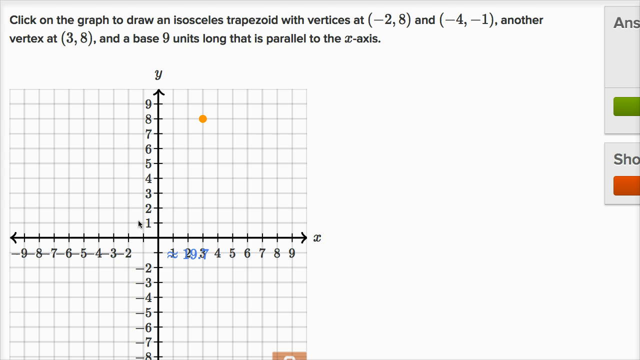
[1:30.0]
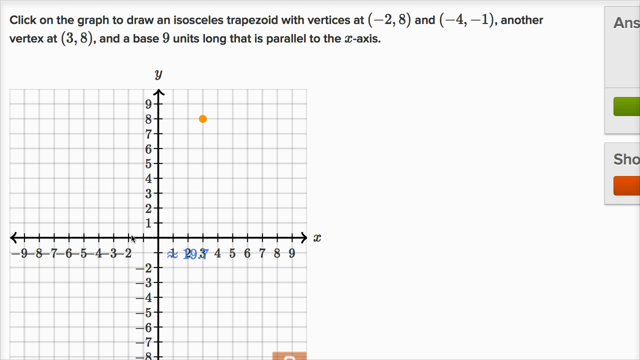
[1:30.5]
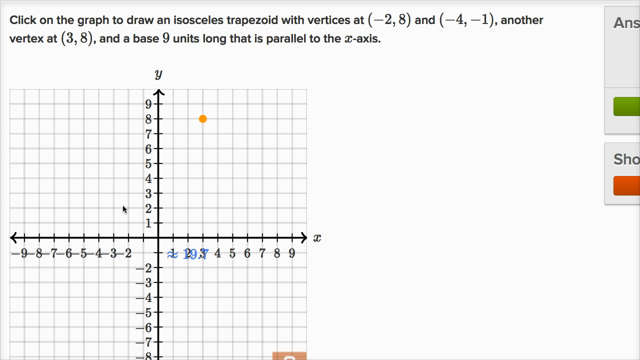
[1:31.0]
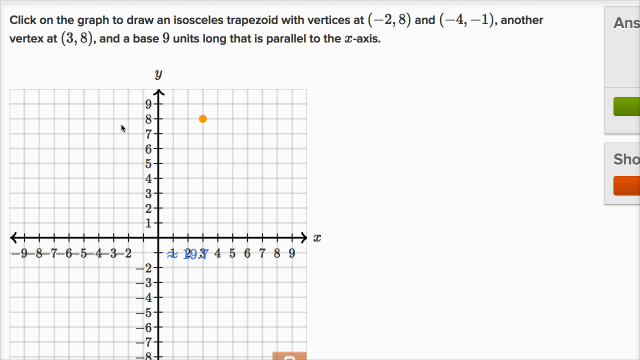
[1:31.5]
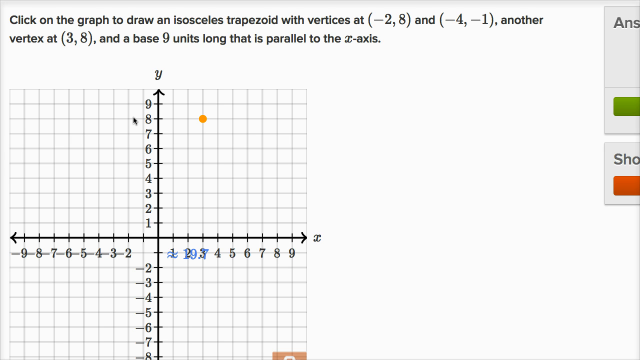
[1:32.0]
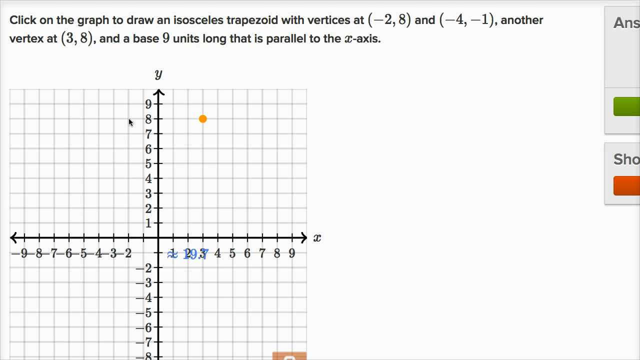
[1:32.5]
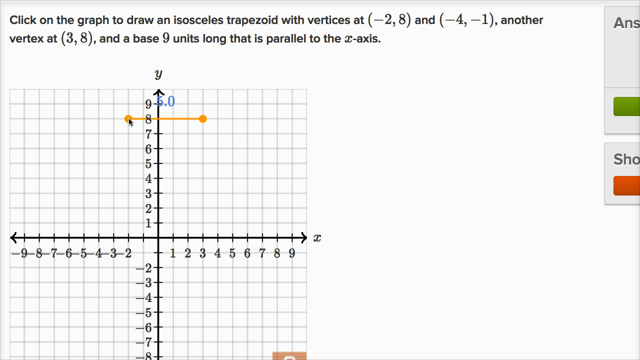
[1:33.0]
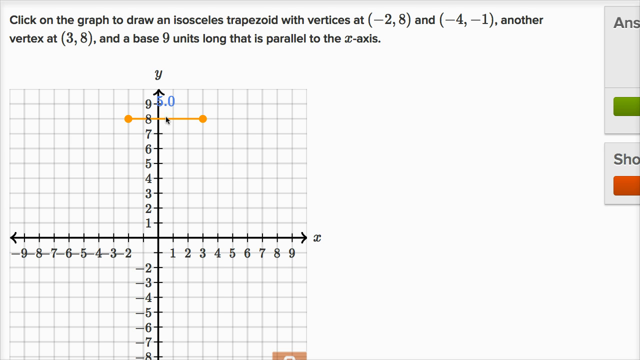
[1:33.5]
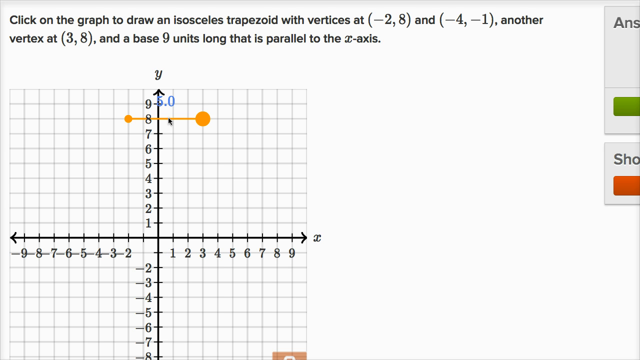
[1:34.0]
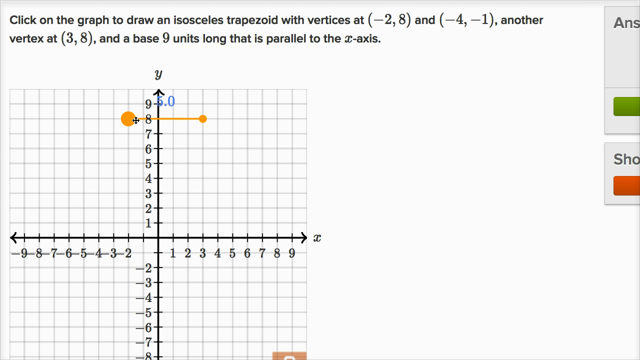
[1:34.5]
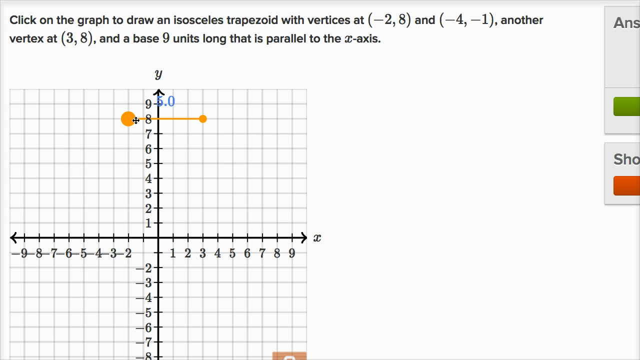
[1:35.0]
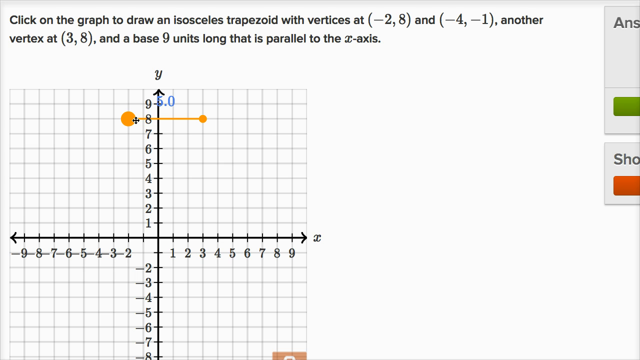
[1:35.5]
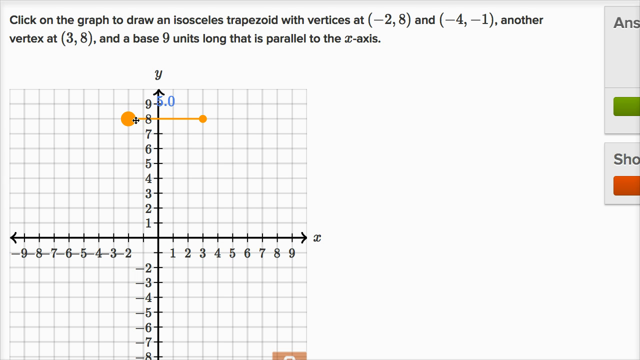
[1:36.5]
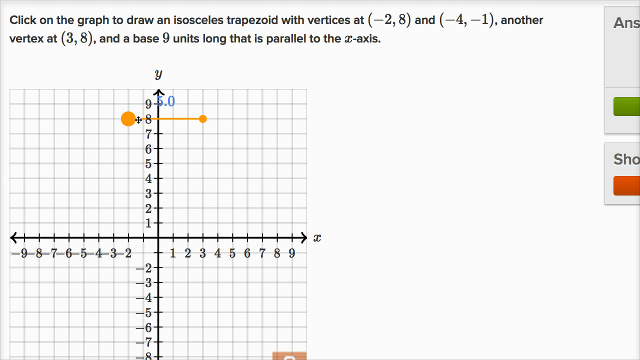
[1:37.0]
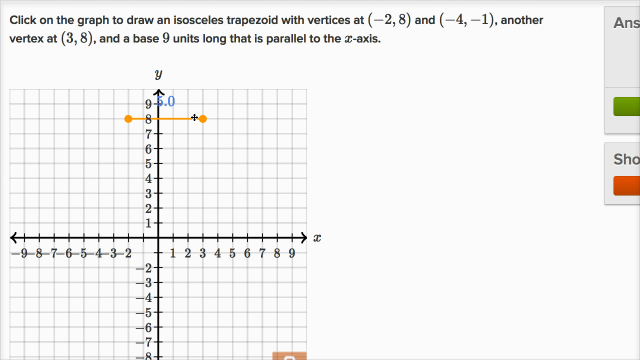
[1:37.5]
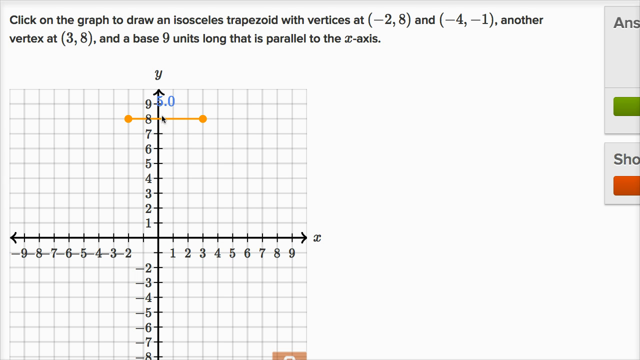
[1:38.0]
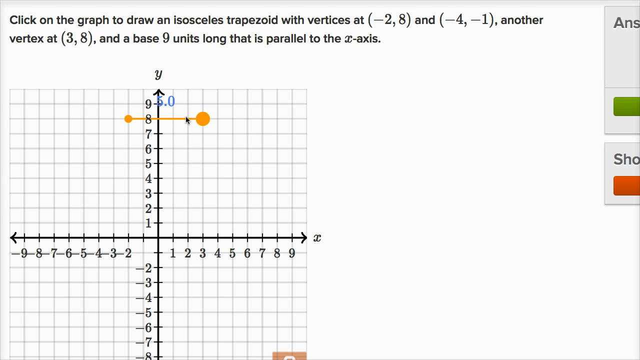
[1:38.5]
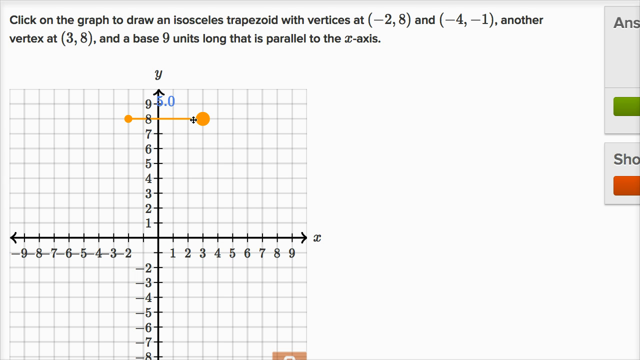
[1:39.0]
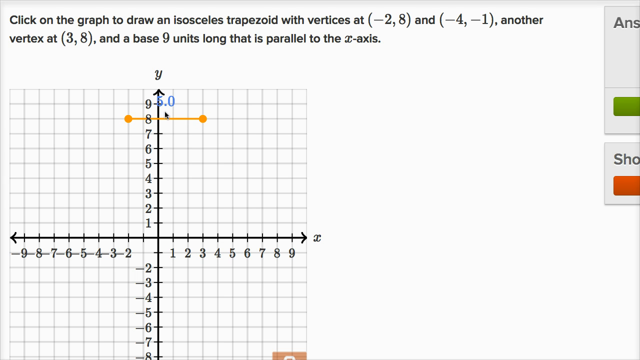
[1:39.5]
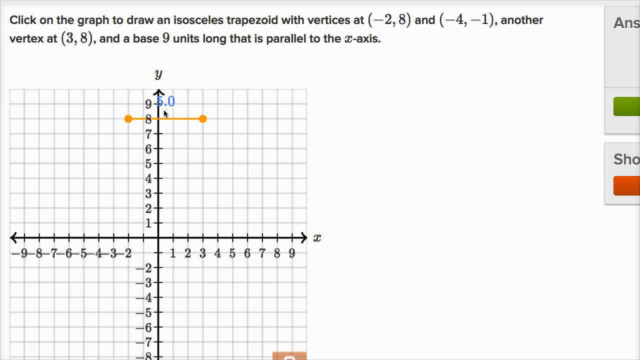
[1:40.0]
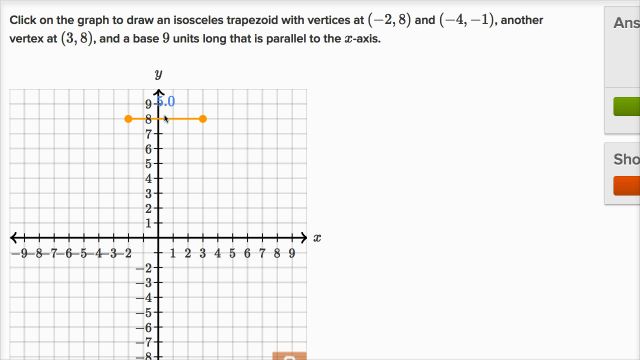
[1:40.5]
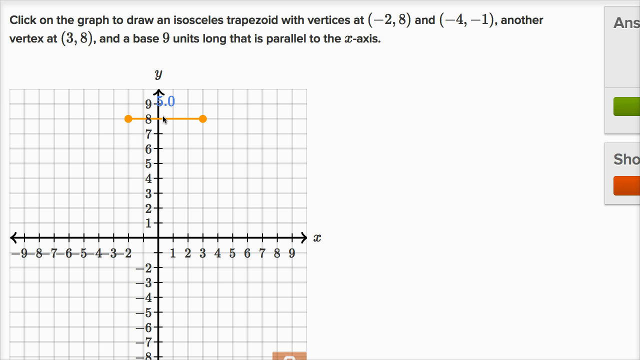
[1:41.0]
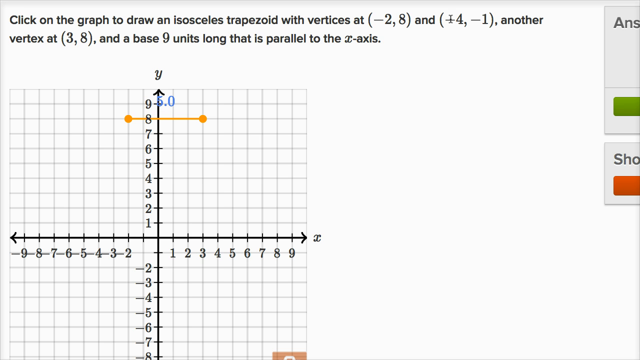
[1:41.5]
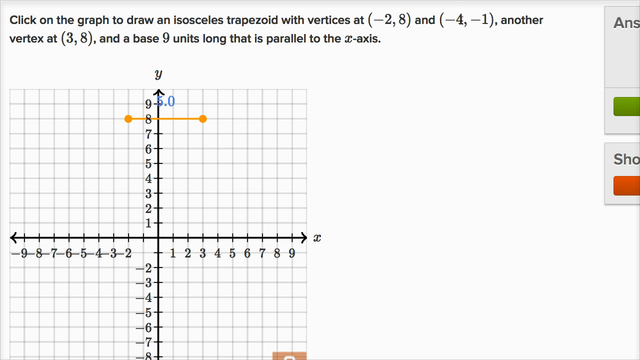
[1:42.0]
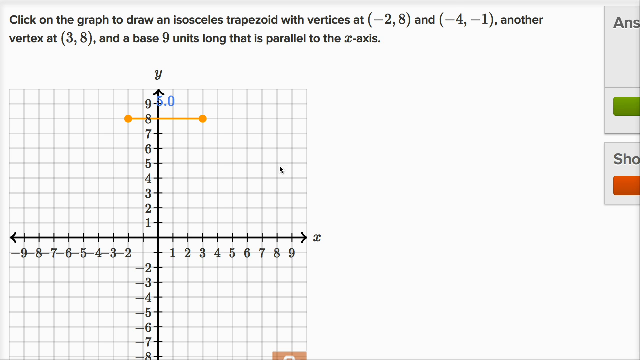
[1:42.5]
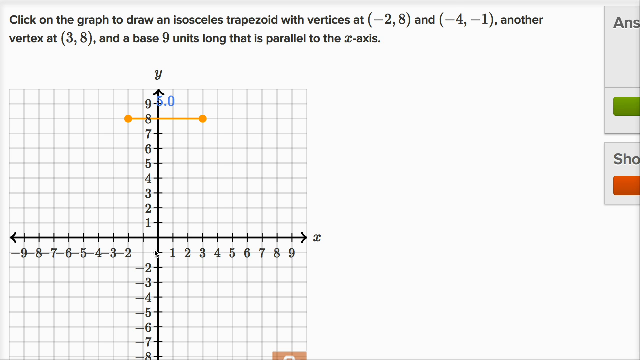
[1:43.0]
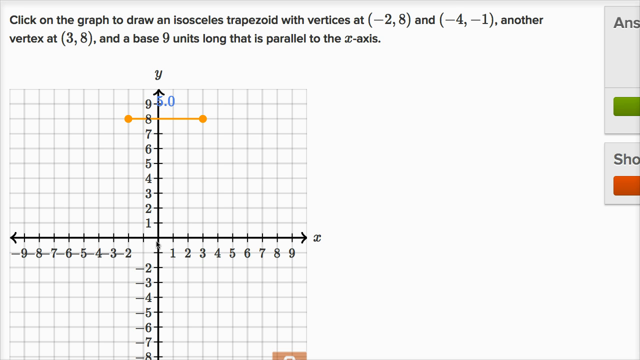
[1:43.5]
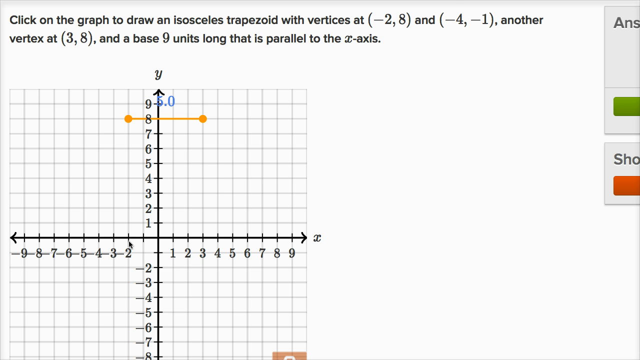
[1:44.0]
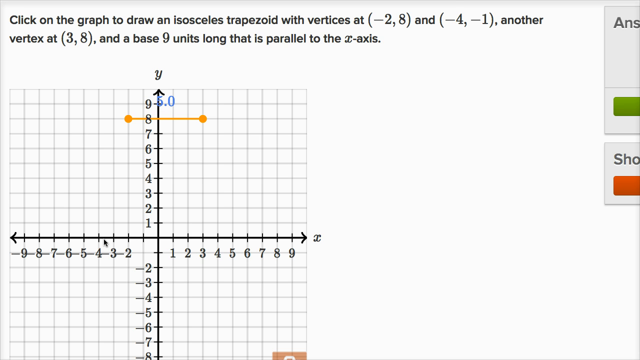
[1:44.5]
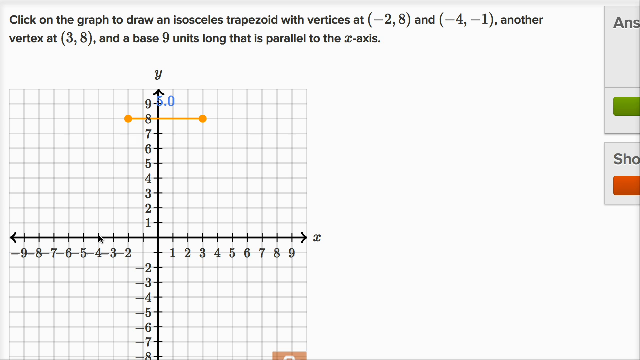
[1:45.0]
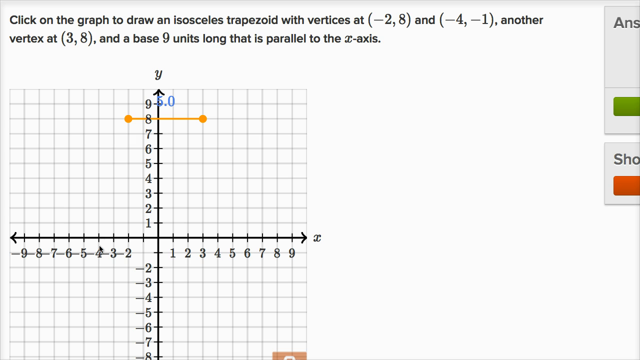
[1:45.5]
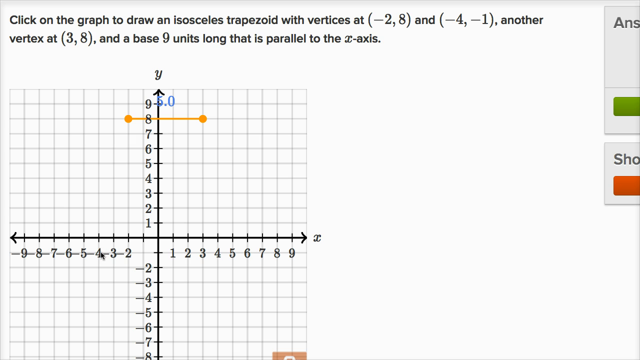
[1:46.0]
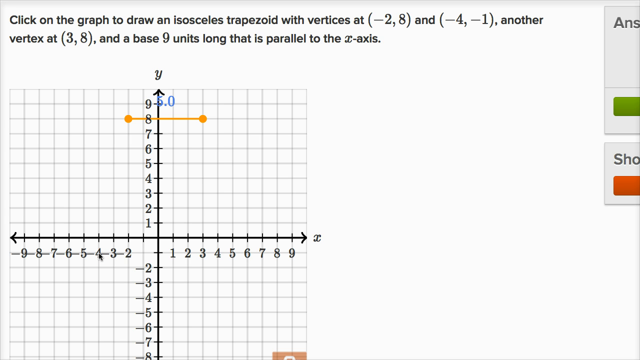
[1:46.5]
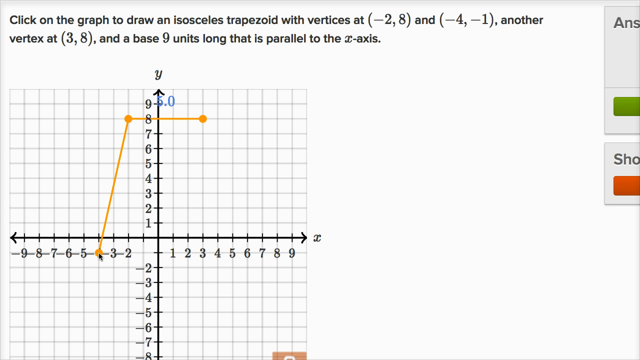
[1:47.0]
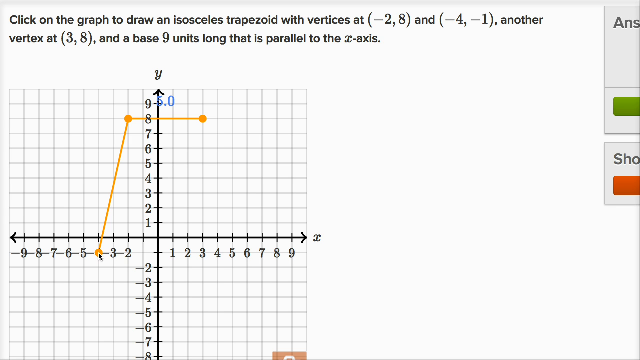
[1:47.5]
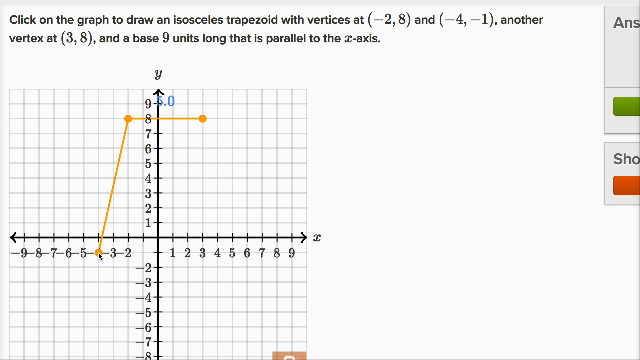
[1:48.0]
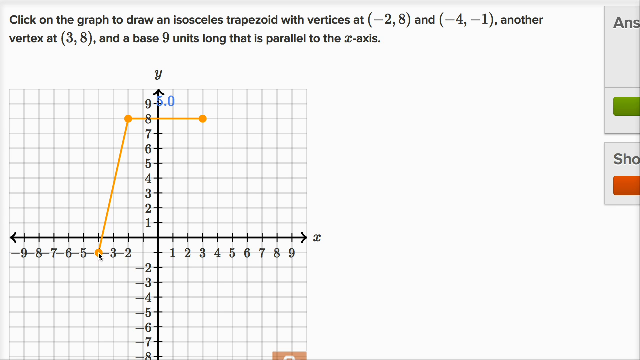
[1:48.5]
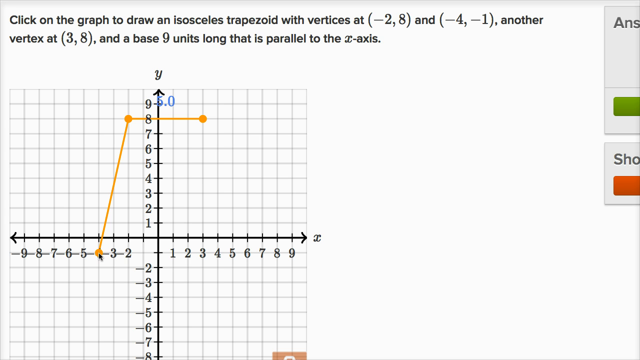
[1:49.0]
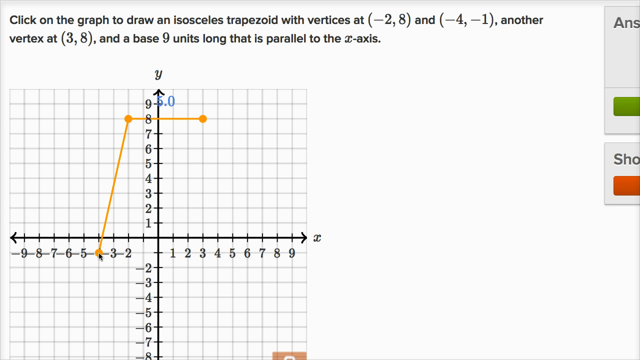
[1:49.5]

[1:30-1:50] The dot is next to 8. It moves to 8 and a straight line is formed. The drawing then goes to the middle, then to number 4, and then rises back in a line going to 5. The base is parallel to the x-axis.